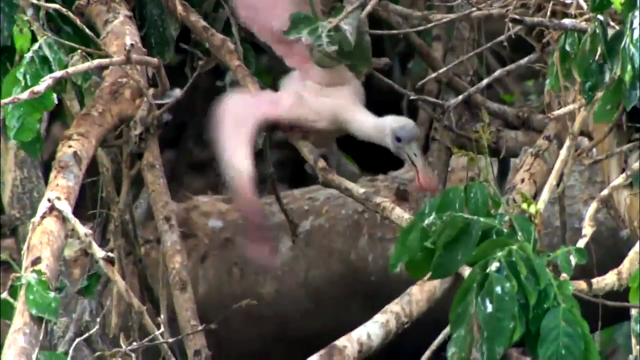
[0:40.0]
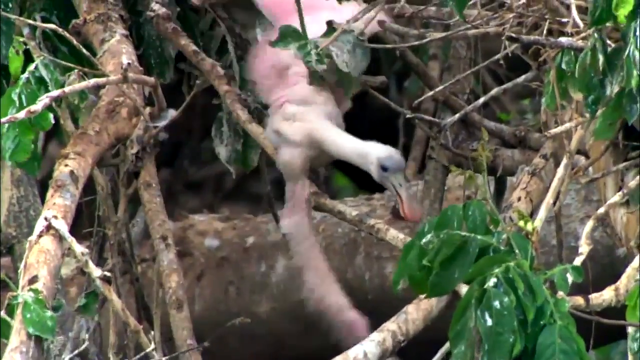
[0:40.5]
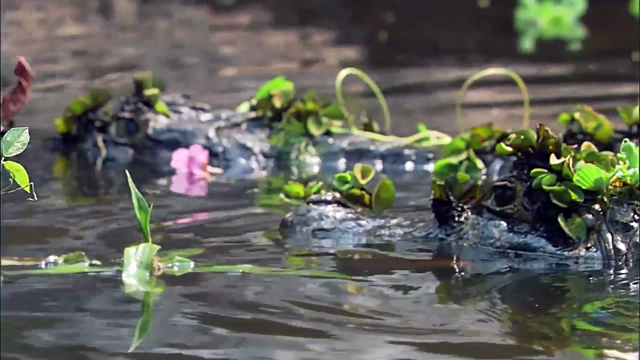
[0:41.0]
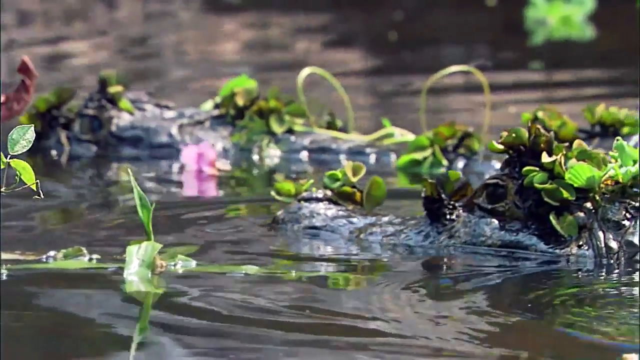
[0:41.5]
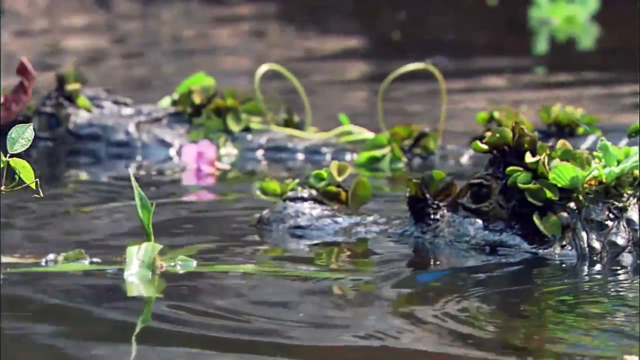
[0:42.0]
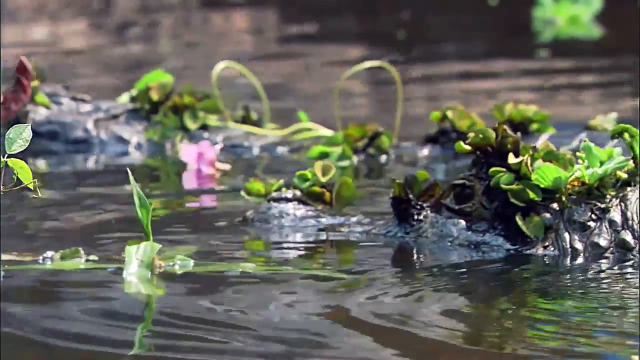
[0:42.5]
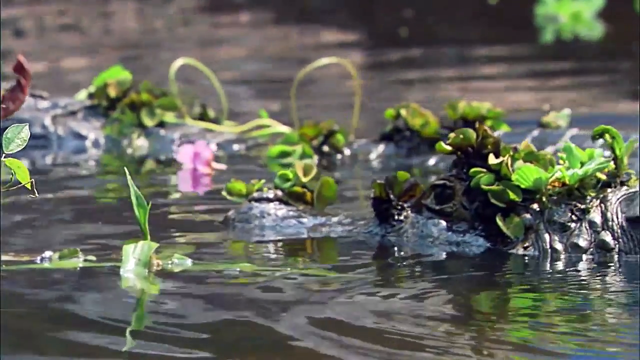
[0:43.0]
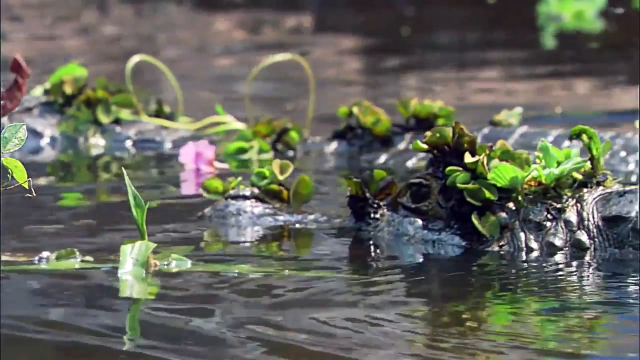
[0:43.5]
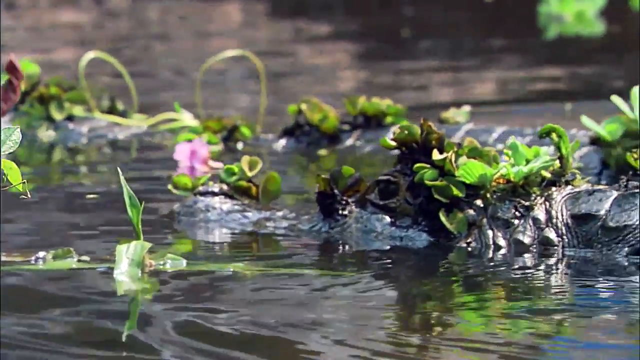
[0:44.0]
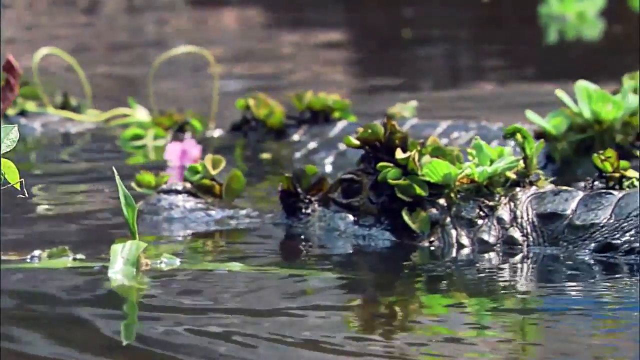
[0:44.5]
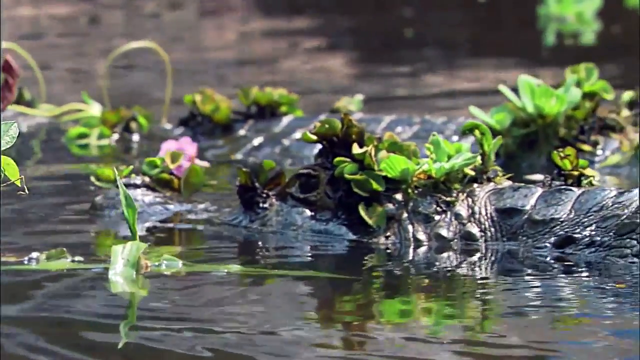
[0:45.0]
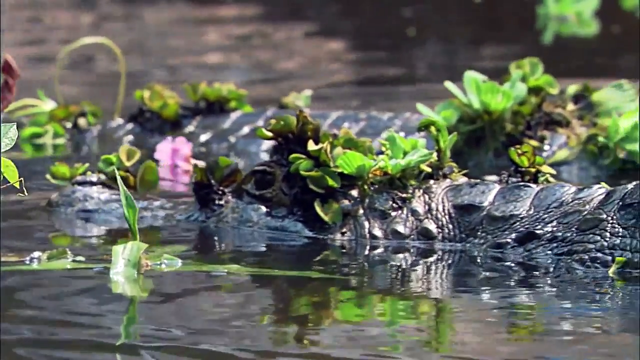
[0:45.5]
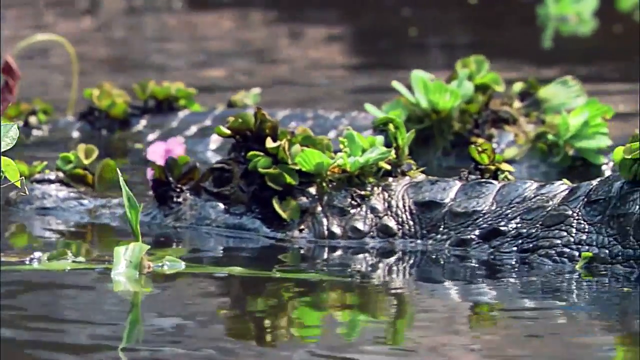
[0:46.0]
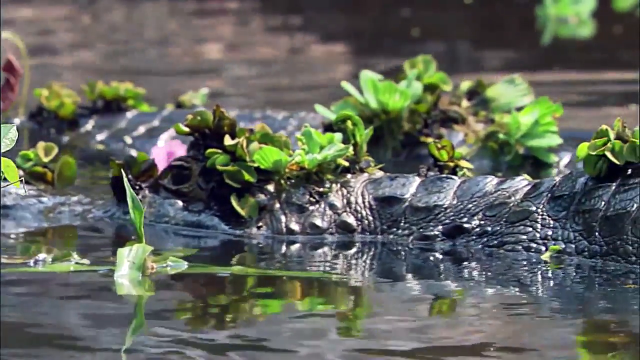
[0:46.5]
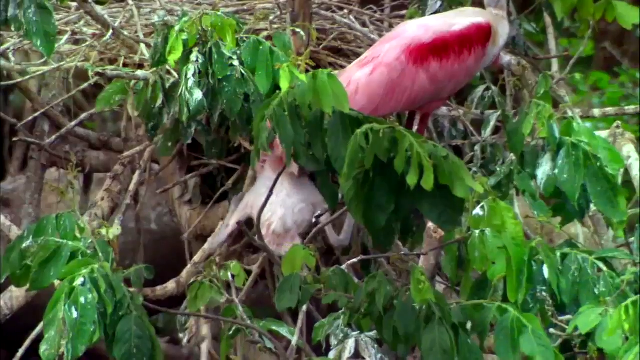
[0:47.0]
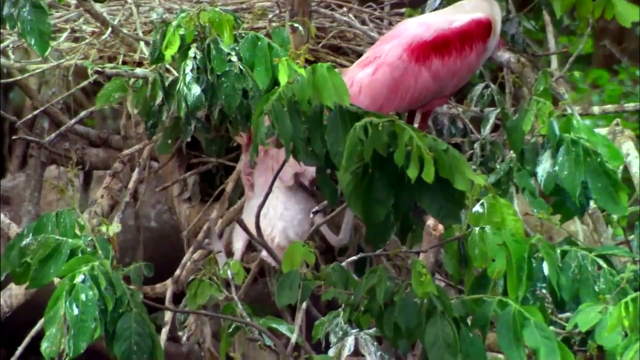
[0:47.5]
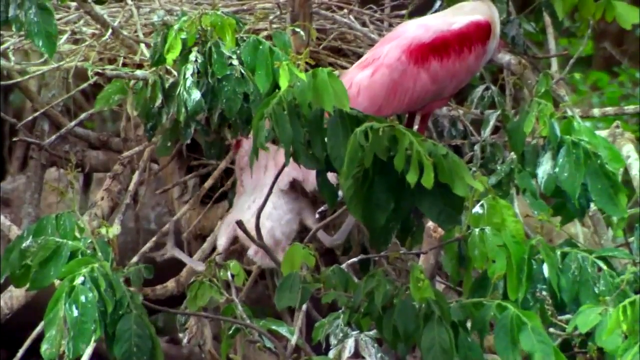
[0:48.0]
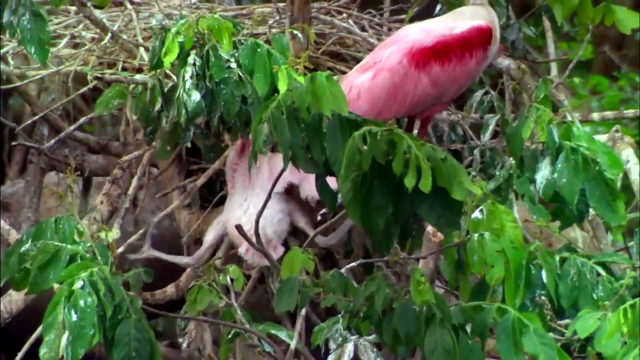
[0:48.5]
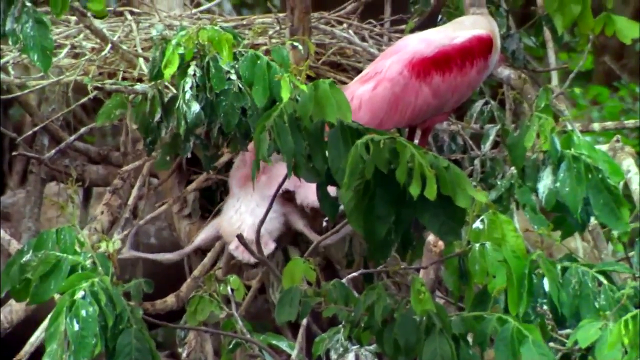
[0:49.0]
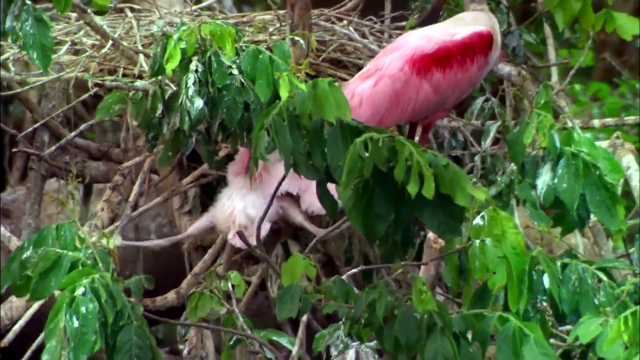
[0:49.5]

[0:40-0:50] Water and some small trees appear, then some birds on the trees, doing something such as trying to get food. On the water is what seems to be the head of a crocodile, and apparently two crocodiles are swimming in the water.